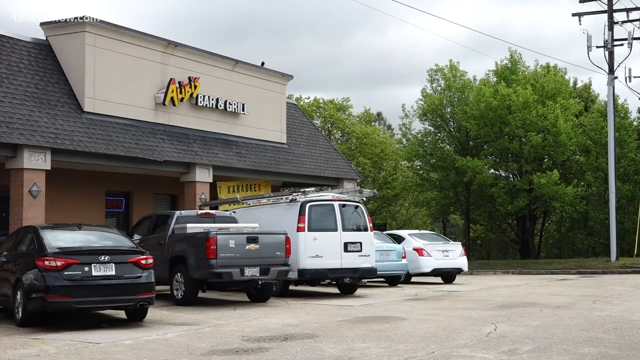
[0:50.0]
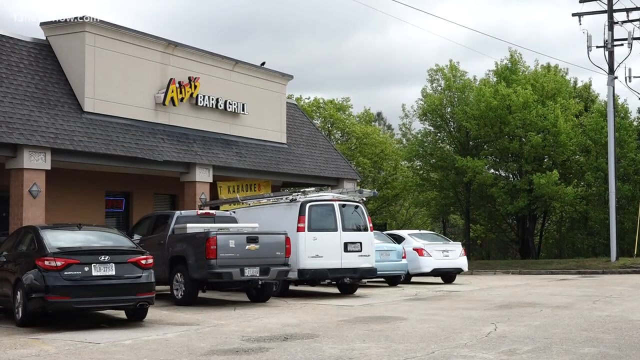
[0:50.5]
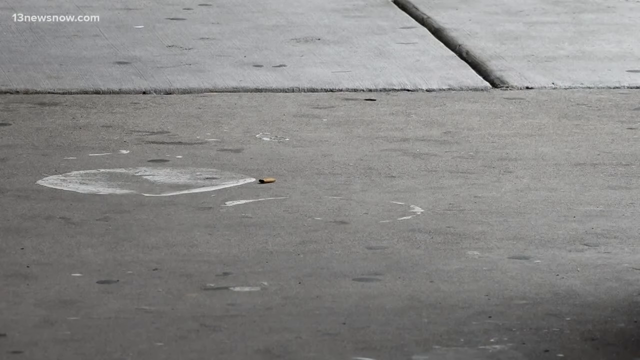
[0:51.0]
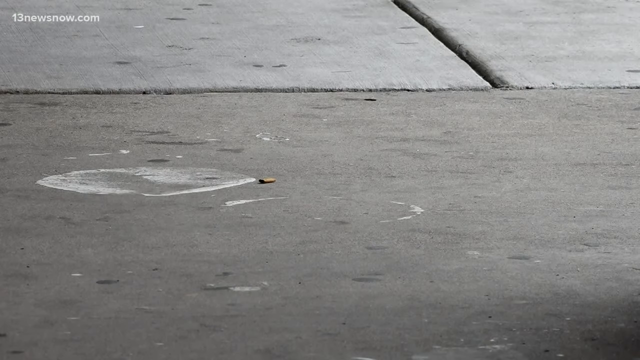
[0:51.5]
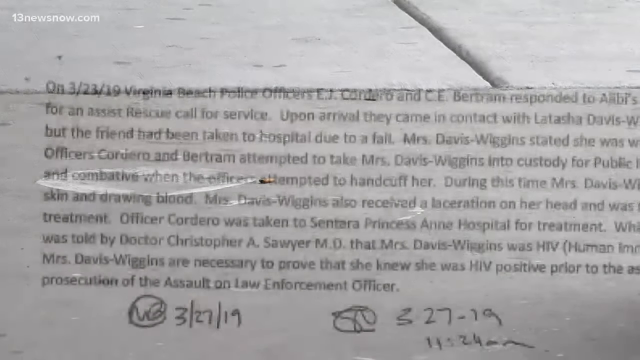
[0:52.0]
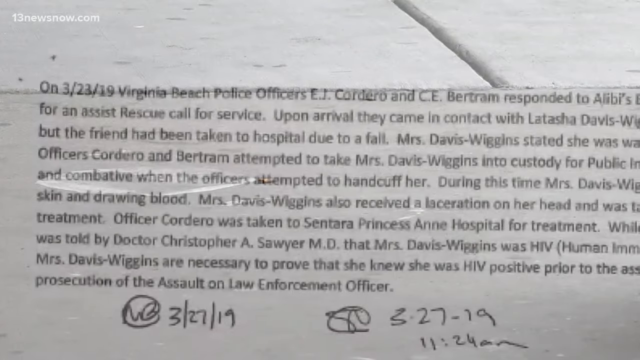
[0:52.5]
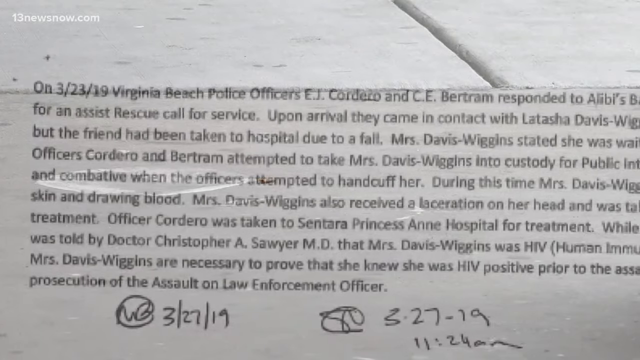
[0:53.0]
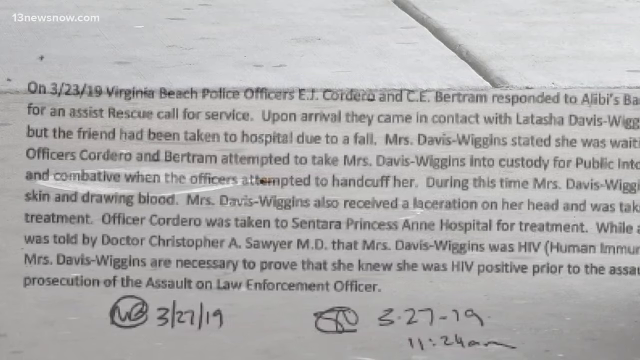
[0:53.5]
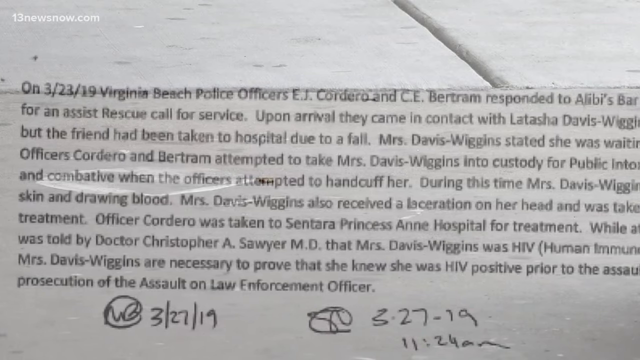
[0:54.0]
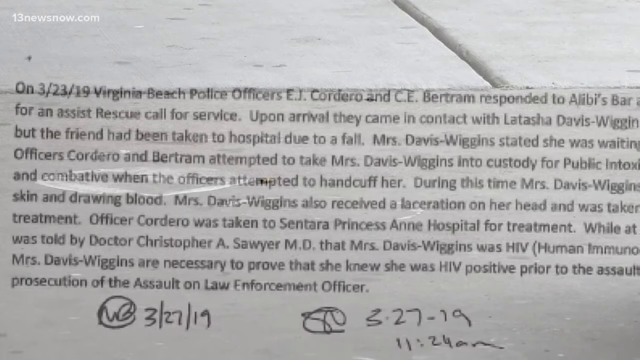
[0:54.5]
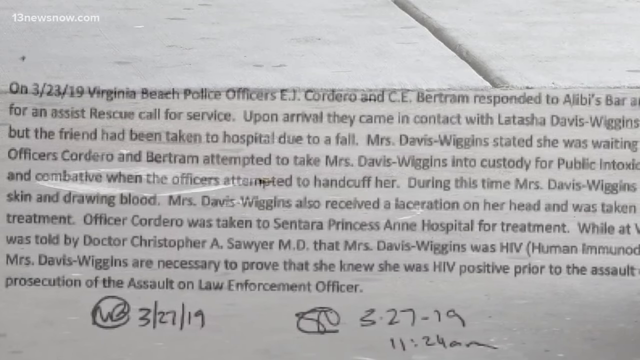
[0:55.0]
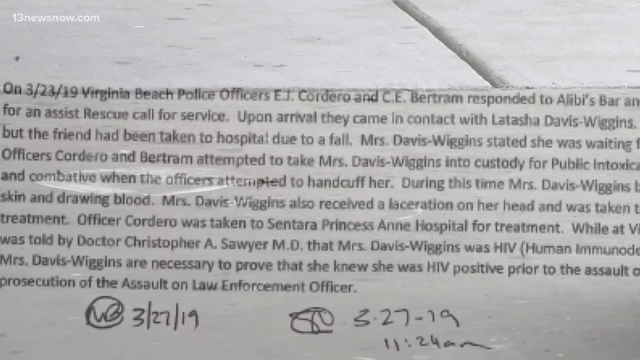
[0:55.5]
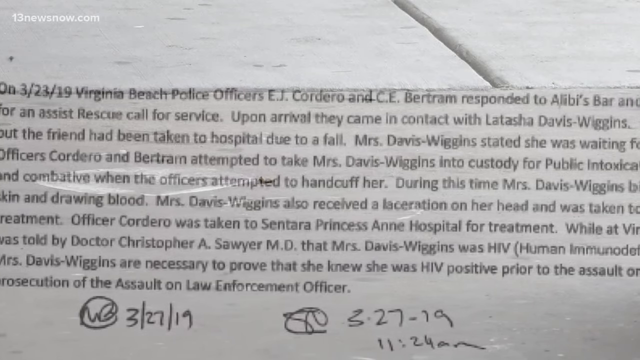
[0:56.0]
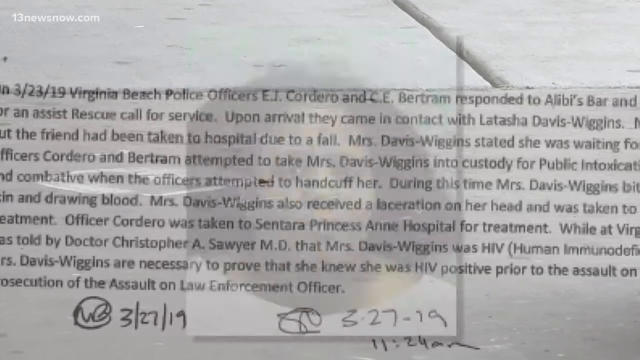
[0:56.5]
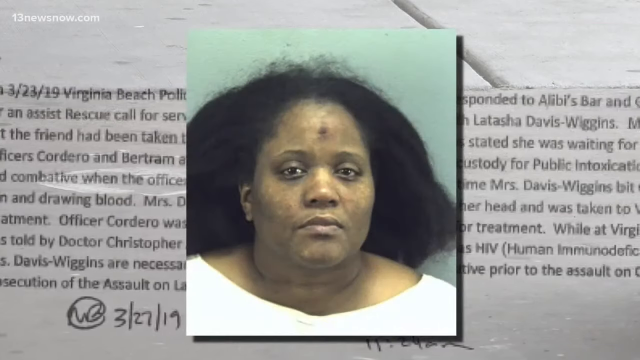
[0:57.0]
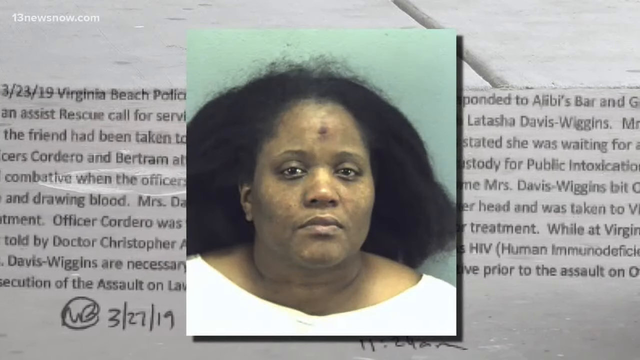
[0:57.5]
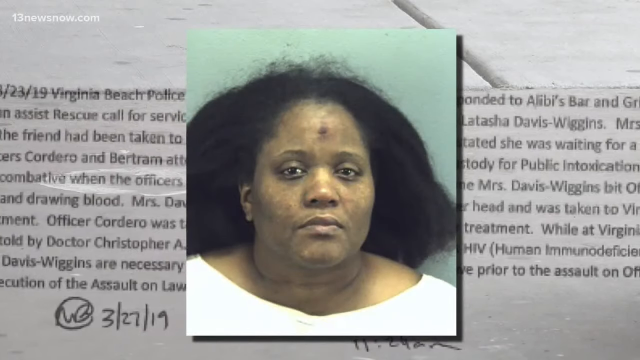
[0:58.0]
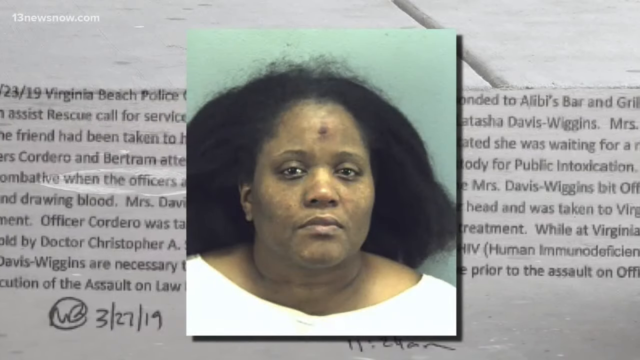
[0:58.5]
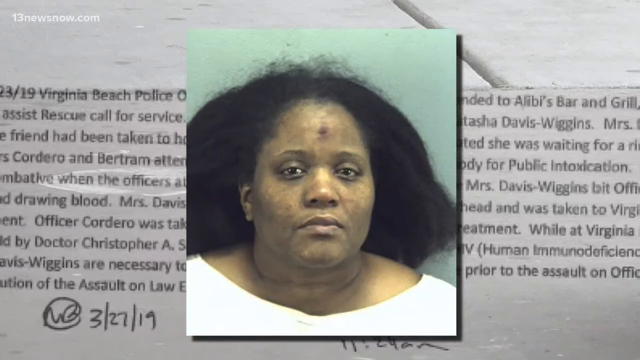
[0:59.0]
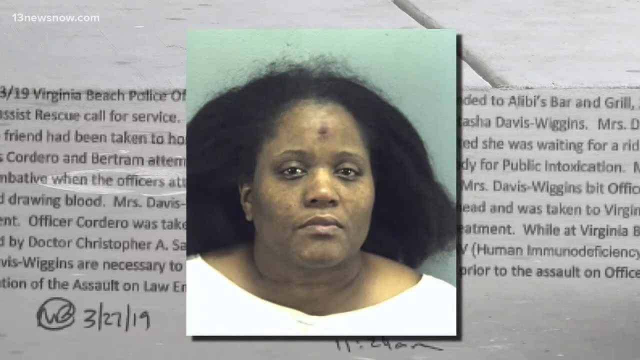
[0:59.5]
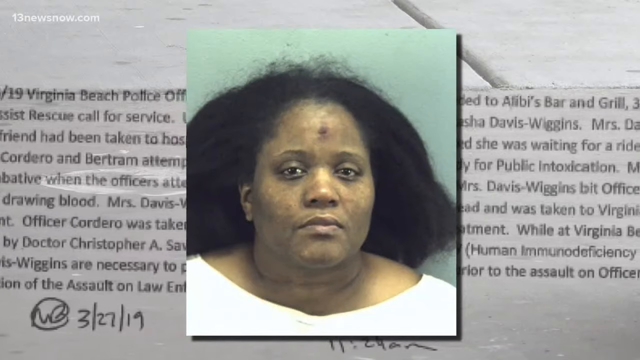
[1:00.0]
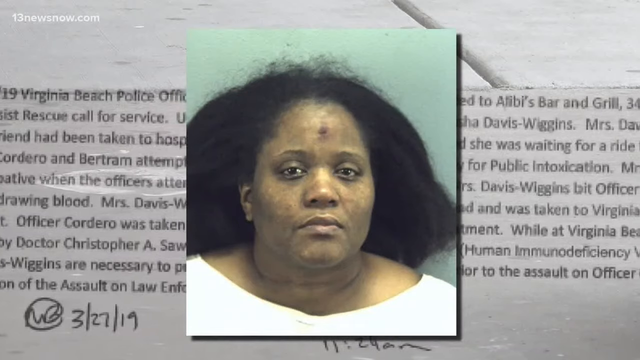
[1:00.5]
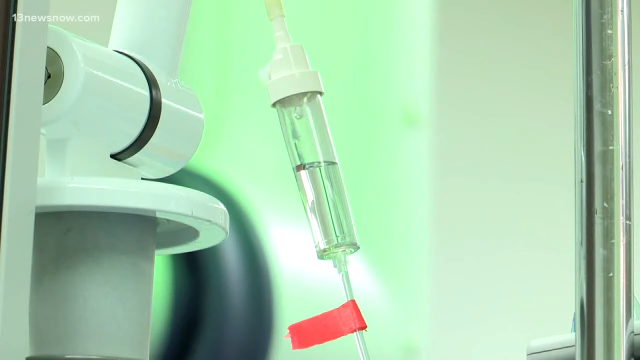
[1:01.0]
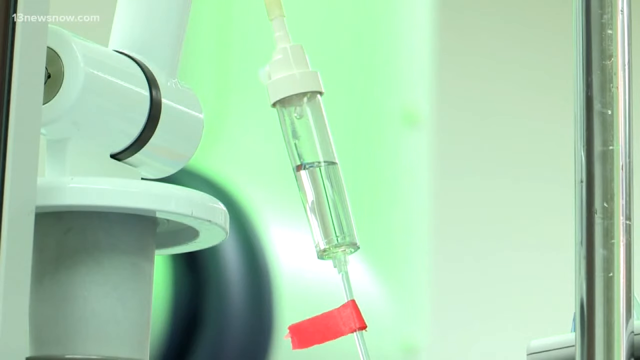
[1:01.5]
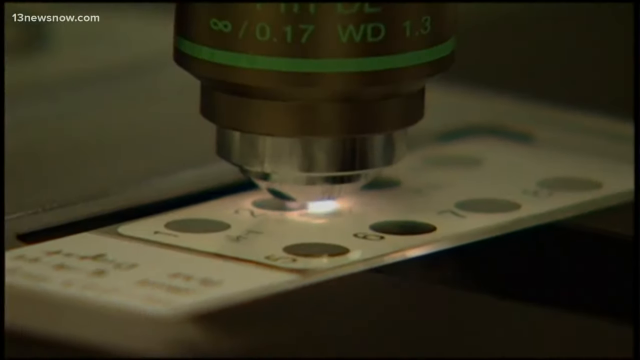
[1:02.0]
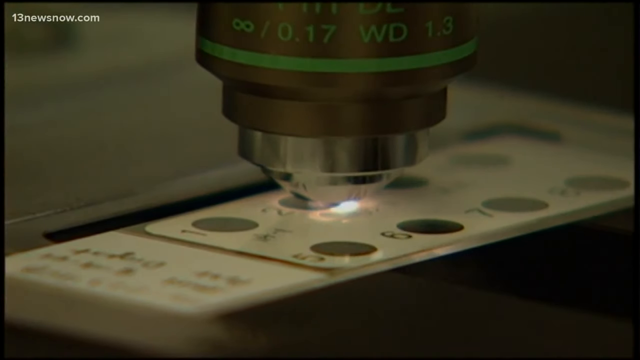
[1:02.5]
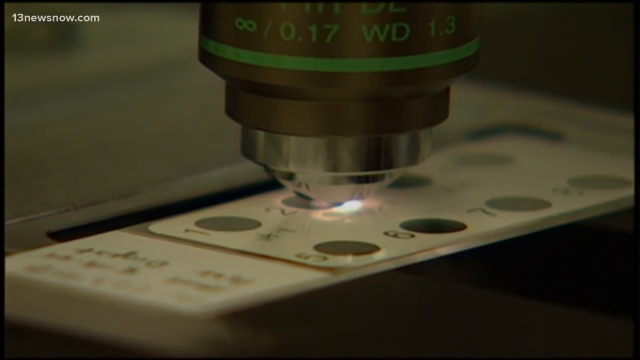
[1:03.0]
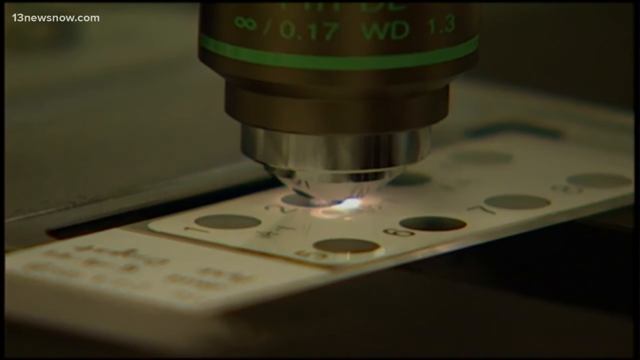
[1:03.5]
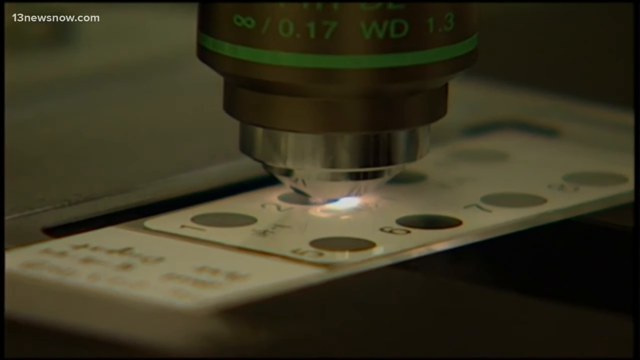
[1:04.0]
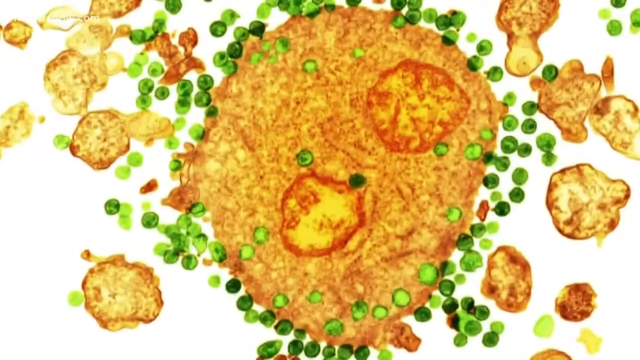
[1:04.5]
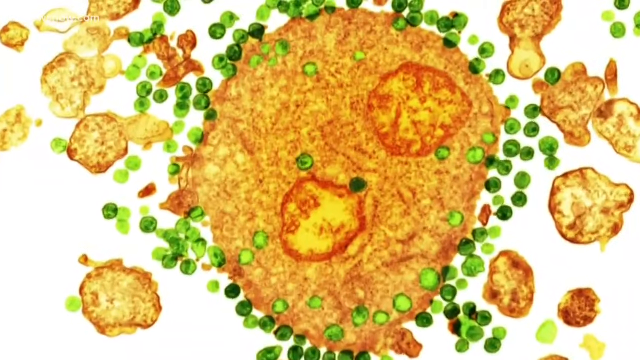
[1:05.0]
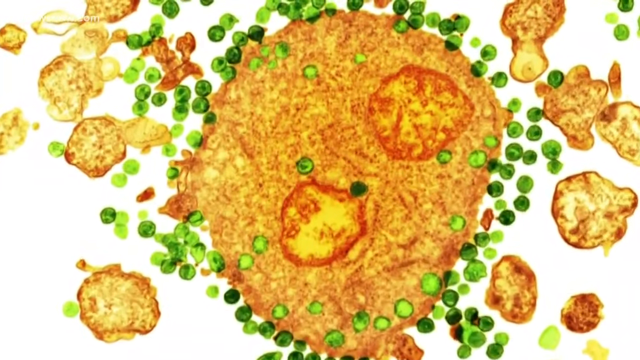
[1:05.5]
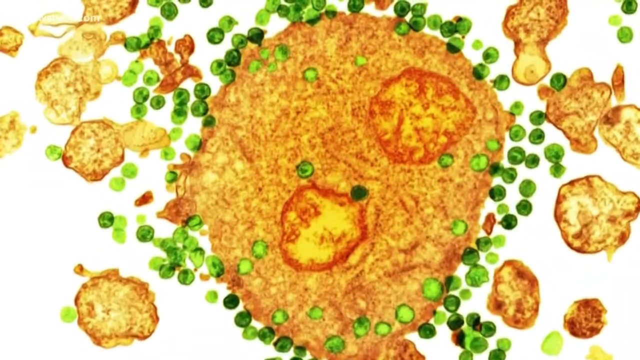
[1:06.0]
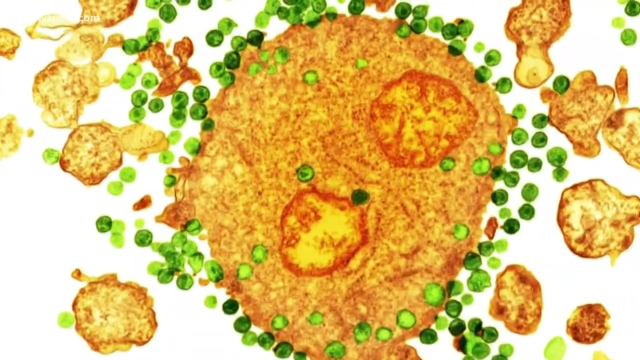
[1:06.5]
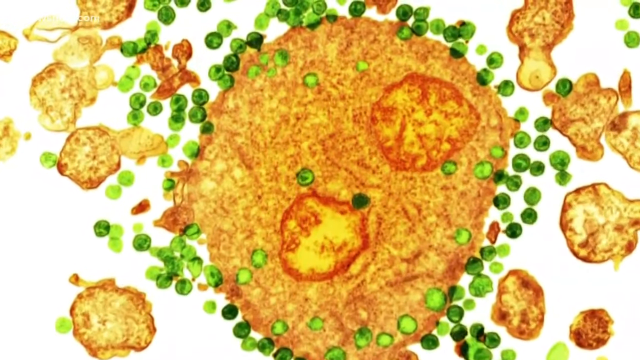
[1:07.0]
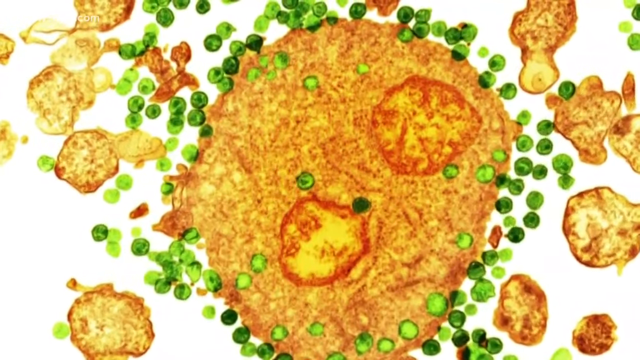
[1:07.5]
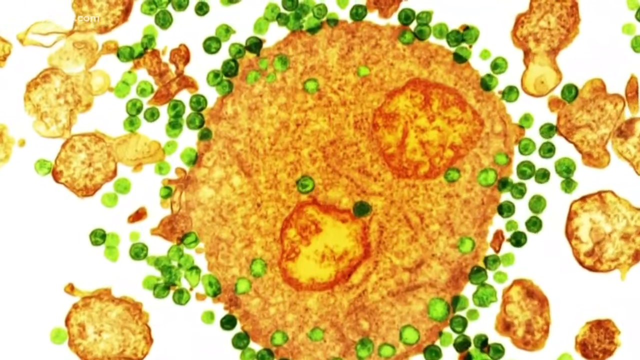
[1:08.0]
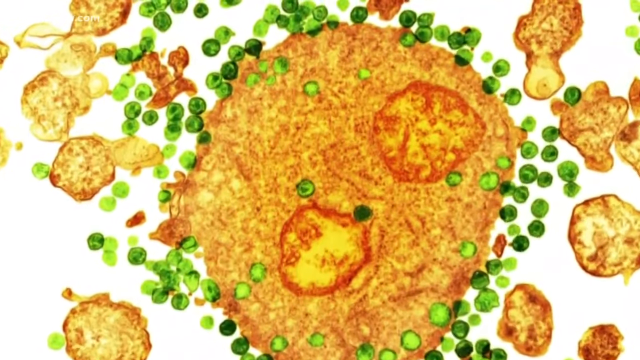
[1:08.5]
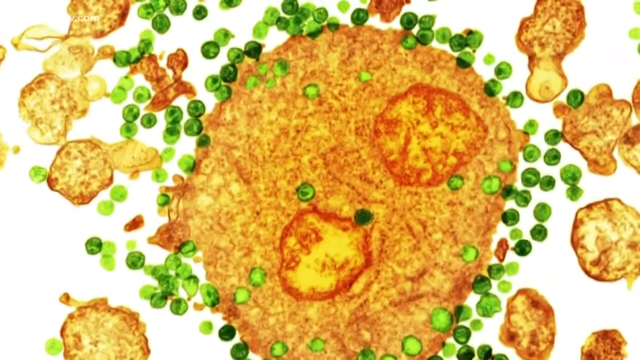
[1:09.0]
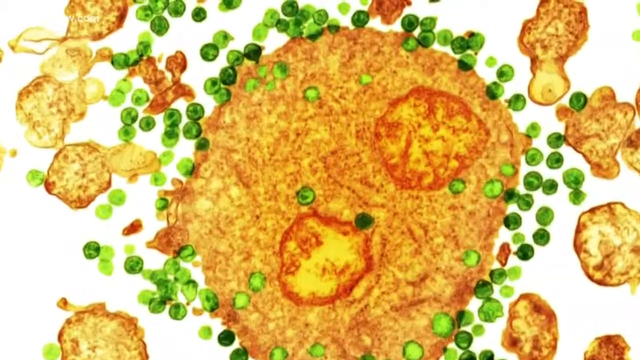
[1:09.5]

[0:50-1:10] The video cuts back to the exterior of Alibis Bar and Grill, then to a close-up of a concrete sidewalk with a white streak and what looks like the shell of a bullet casing. An inset of a court document dated March 23, 2019 appears; it describes the criminal incident the woman has been arrested for and has someone's signature at the bottom. Her mugshot is shown again. The video then cuts to an image of a lab vial with liquid inside, then to a microscope analyzing samples on small circles, with a light at the end of the lens. Next come images of cells: a large, orange, splotchy circle with two small circles inside it and dozens of smaller ones around both sides, surrounded by small green circles that look like peas. It then cuts to another image of cells that look like globs of orange against a blue background.